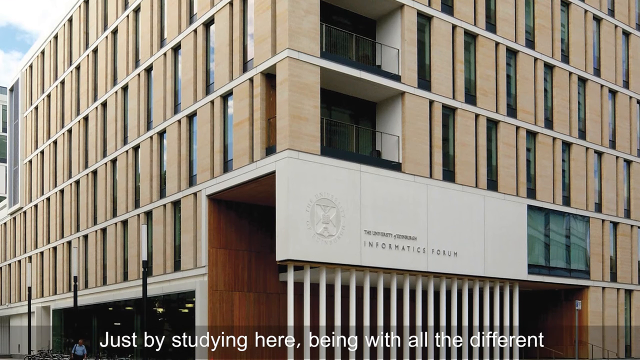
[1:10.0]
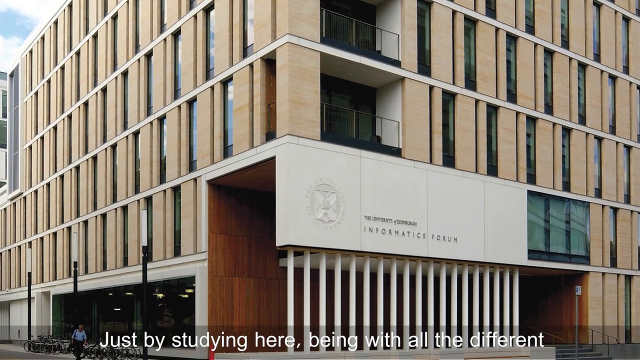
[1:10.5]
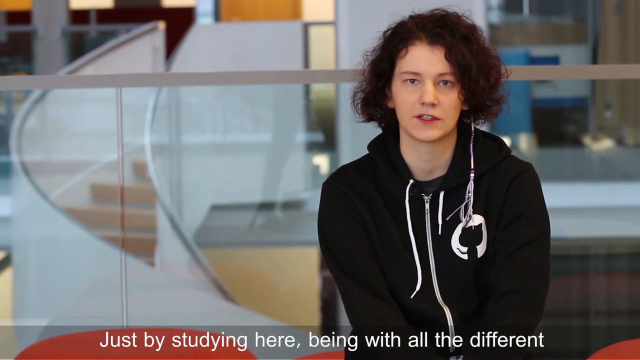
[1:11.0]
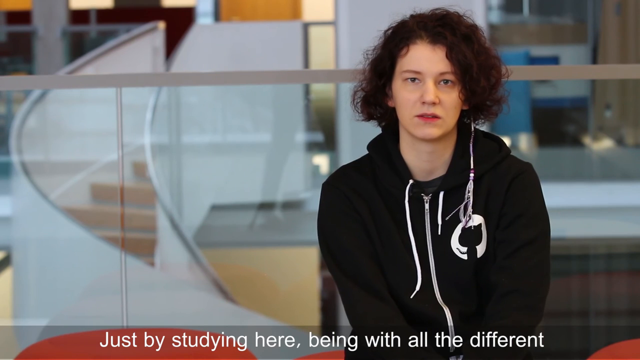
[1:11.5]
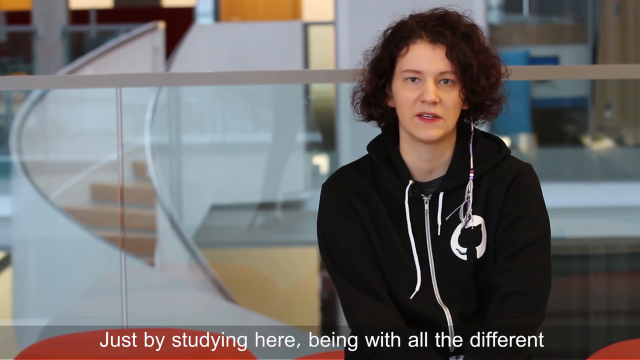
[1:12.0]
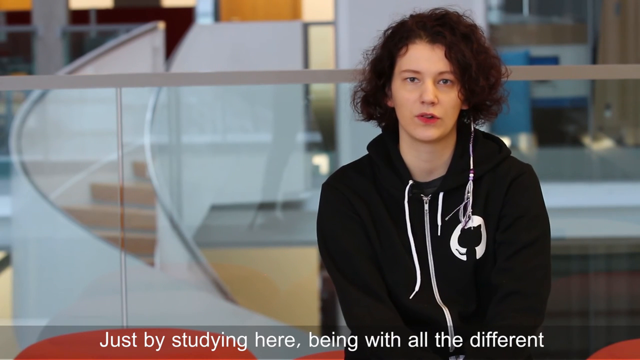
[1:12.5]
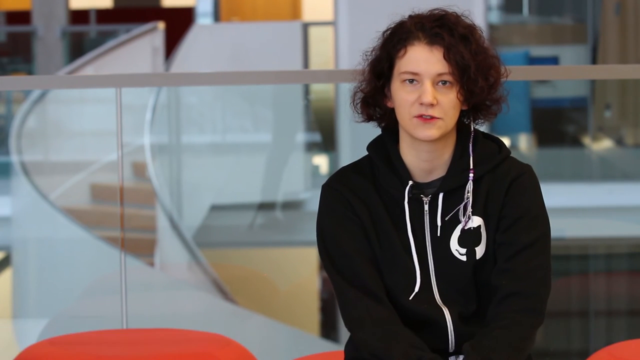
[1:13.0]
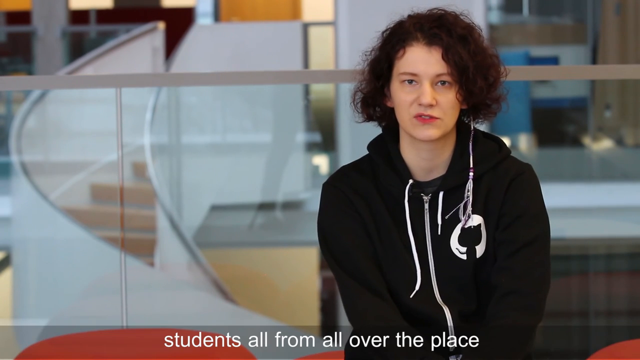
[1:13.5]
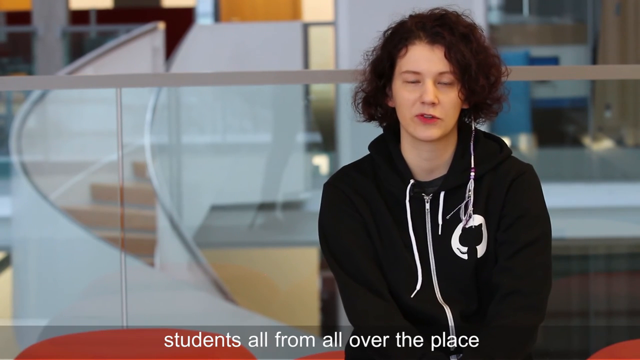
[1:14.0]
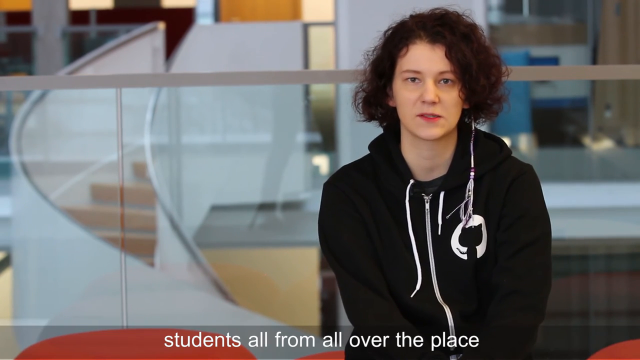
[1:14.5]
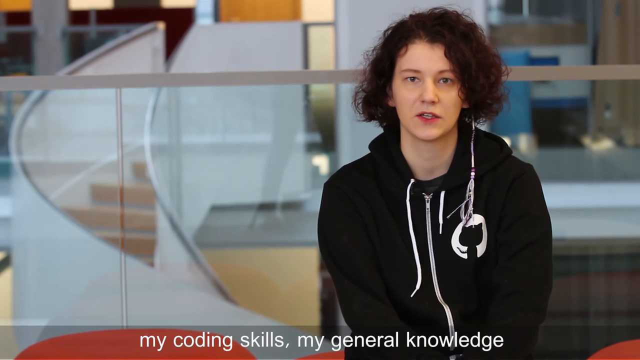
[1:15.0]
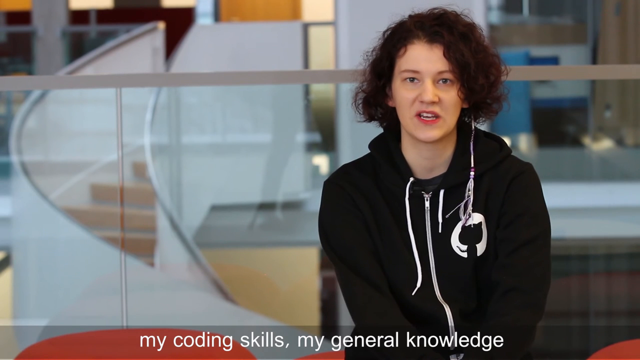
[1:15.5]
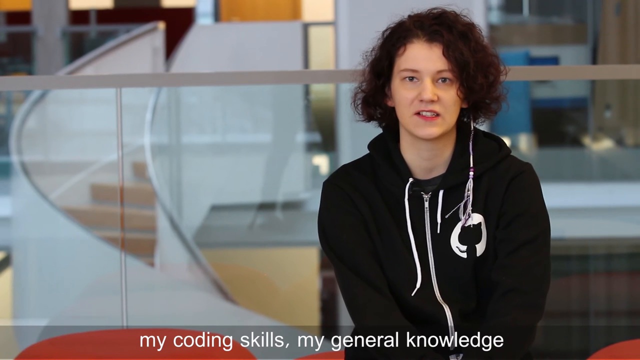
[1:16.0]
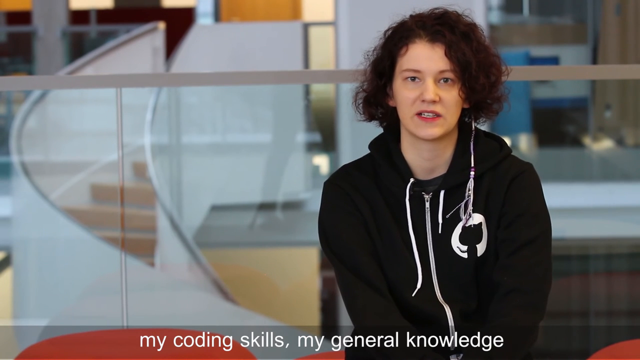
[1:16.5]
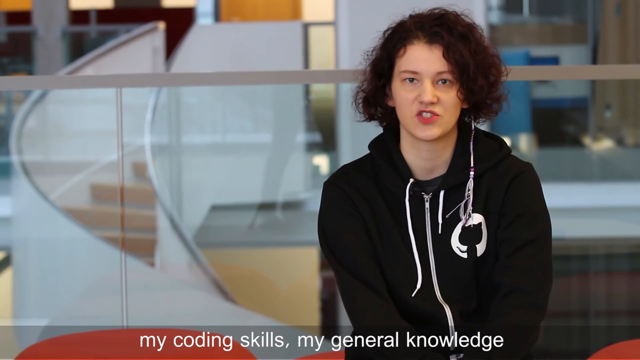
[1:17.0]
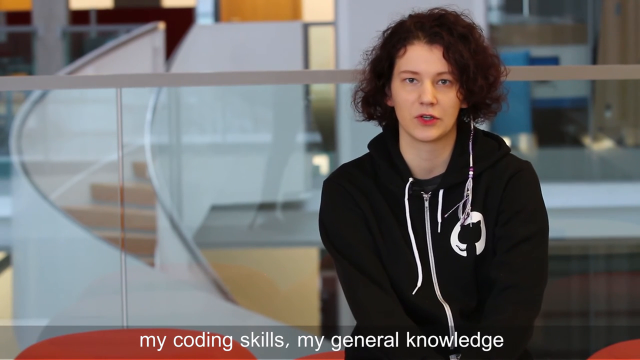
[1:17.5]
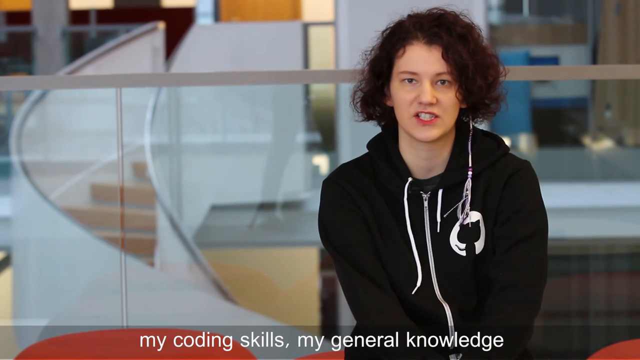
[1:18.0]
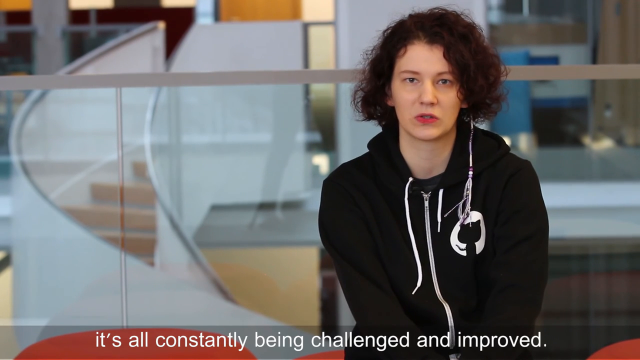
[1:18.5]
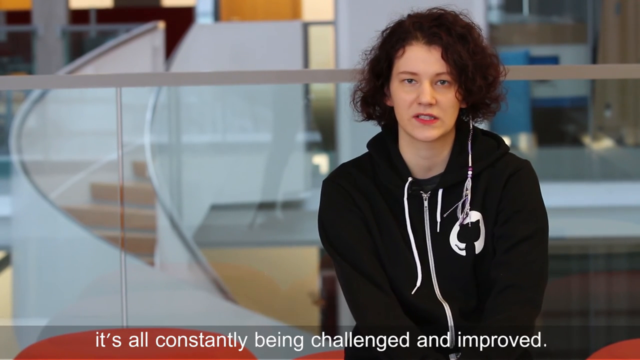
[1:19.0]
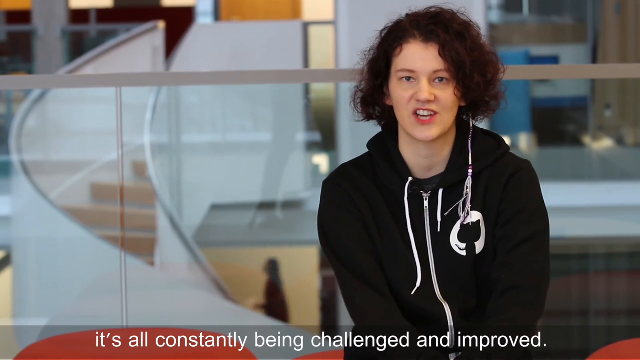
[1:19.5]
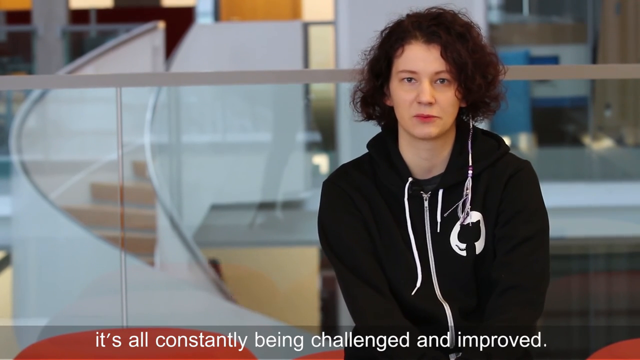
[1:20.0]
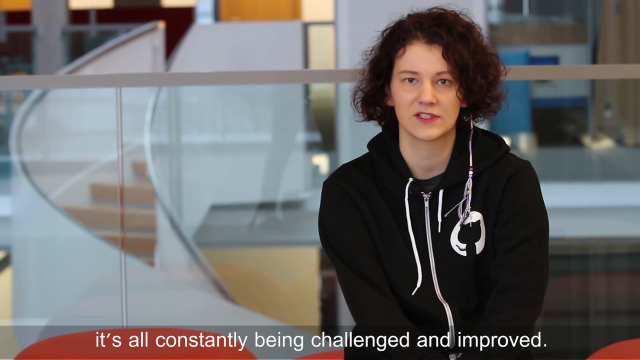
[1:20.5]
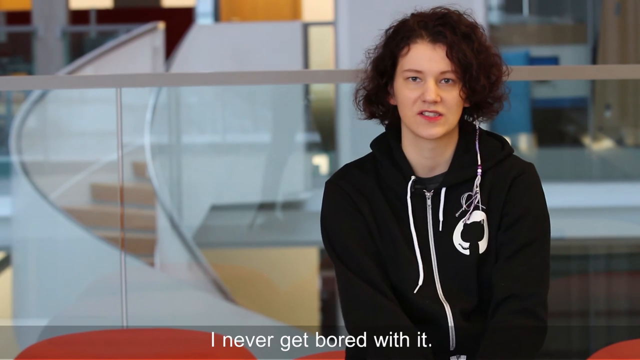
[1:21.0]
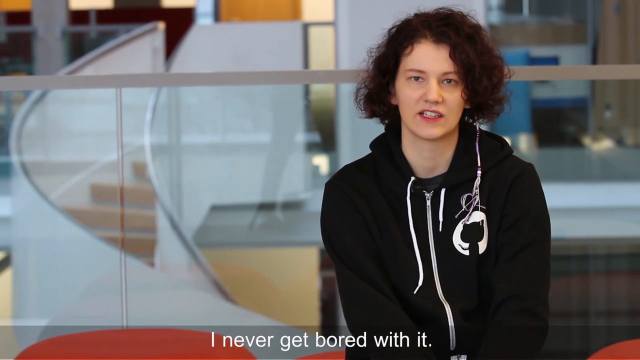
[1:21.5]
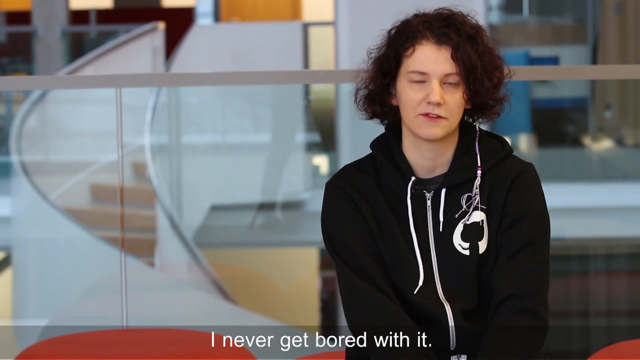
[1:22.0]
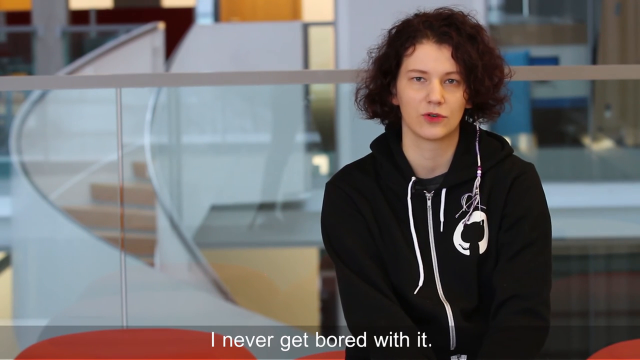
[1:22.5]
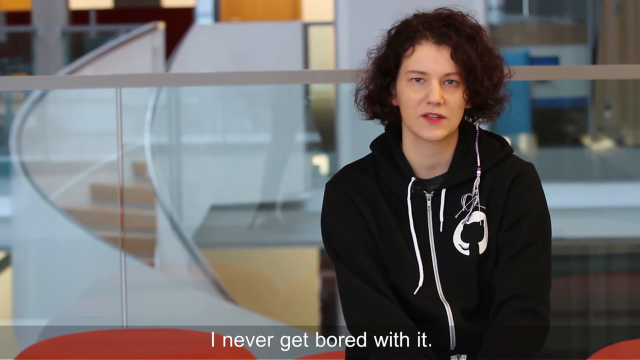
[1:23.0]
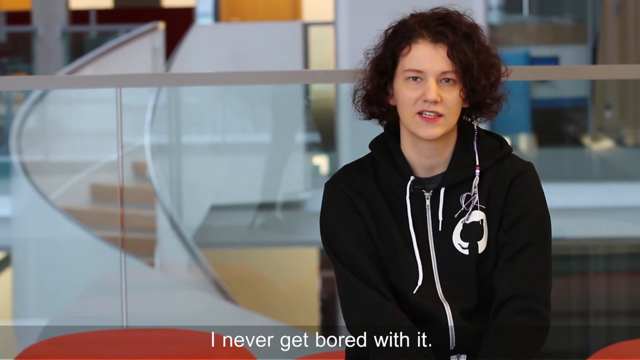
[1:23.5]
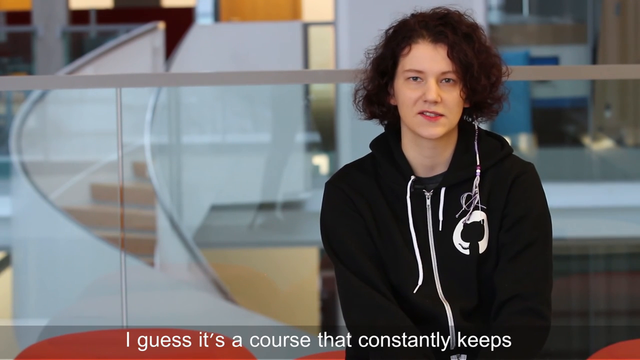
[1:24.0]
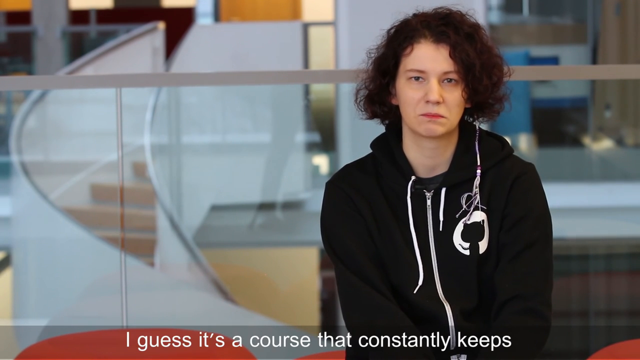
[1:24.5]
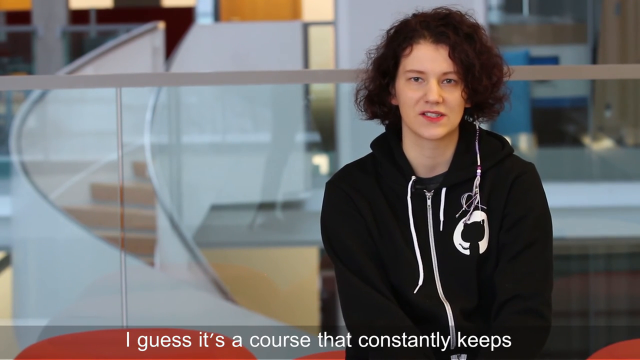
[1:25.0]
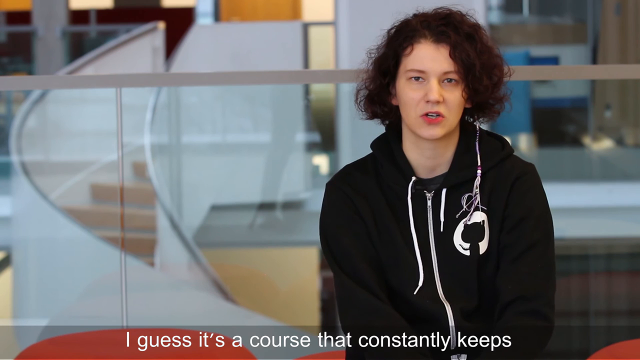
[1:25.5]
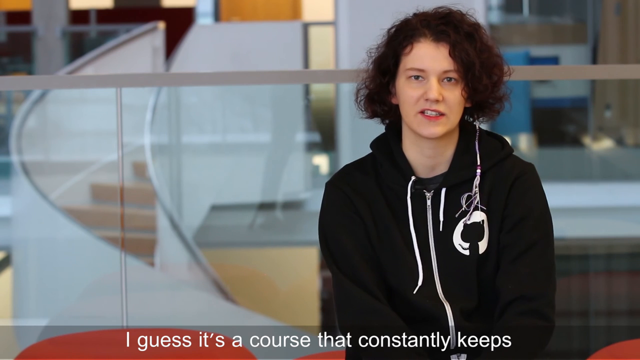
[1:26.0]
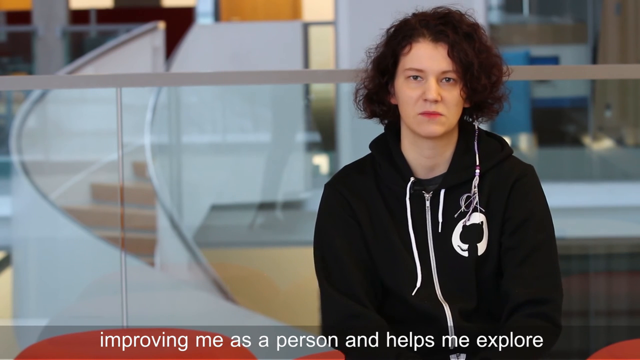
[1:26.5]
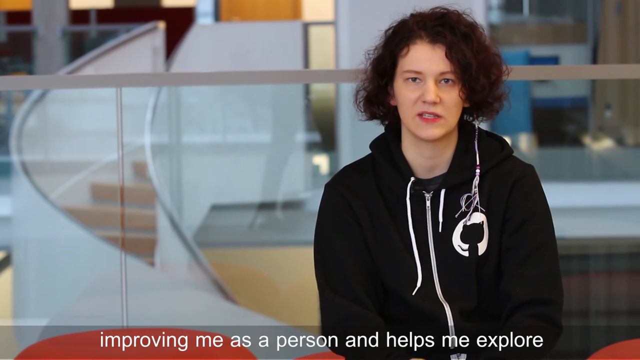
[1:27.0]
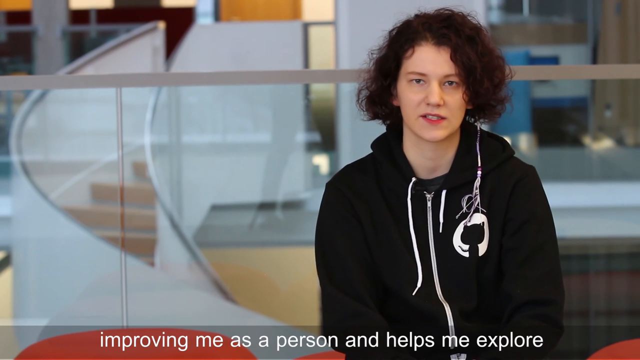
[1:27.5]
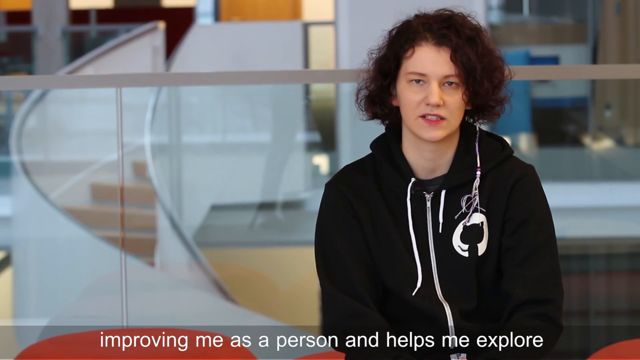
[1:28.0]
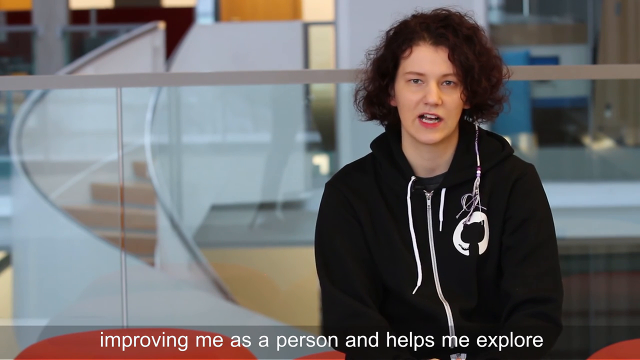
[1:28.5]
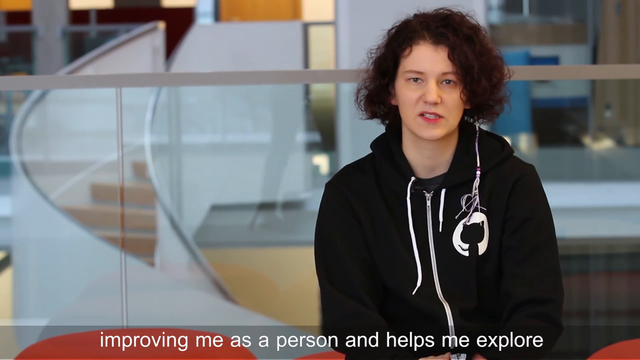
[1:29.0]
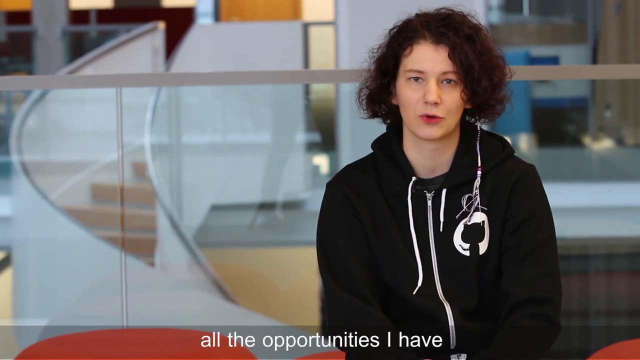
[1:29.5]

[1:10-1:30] A large yellow building with glass windows and balconies is shown, with text on it reading "Informatics Forum" and white pillars attaching to the building at the bottom of the frame. White text at the bottom reads "just by studying here, being with all the different students from all over the world, my coding skills, my general knowledge, it's all constantly being challenged and improved." At that point a person walks by behind the woman, who has a large clear glass window behind her and a white transparent windy staircase with silver handrails. She also states, "I never get bored with it. I guess it's a course that constantly keeps improving me as a person and helps me explore all the opportunities I have."